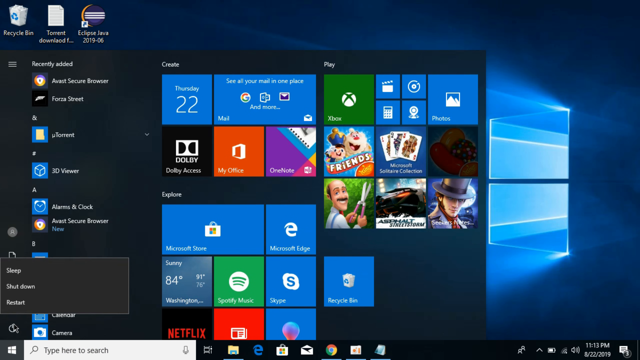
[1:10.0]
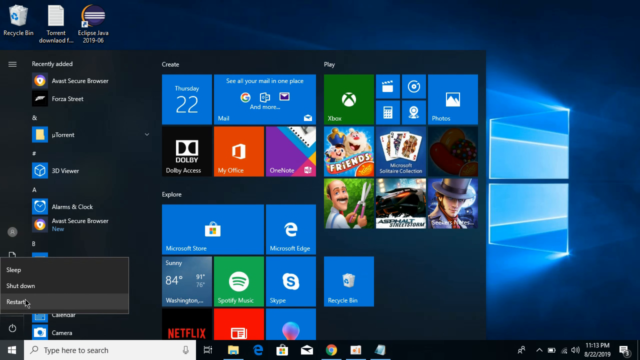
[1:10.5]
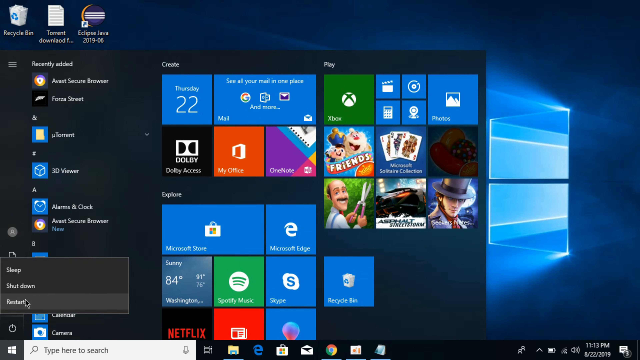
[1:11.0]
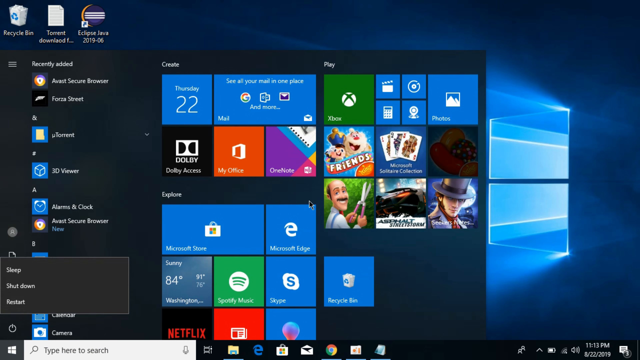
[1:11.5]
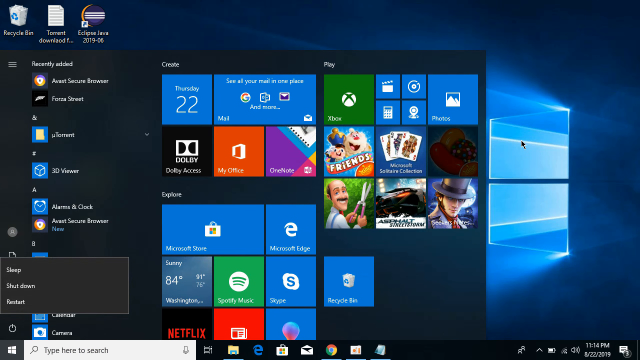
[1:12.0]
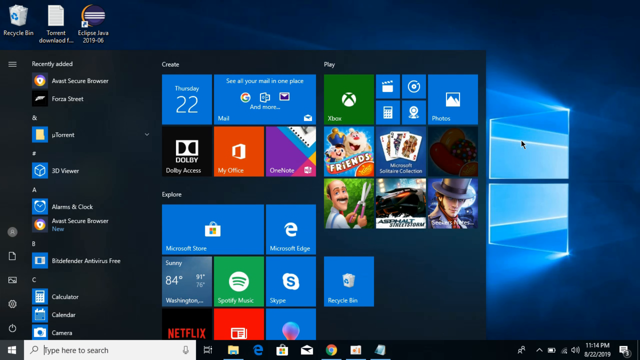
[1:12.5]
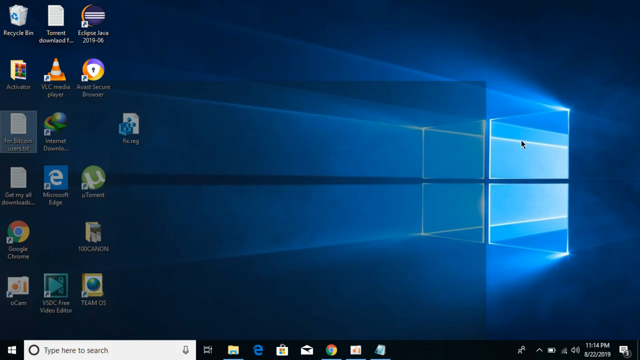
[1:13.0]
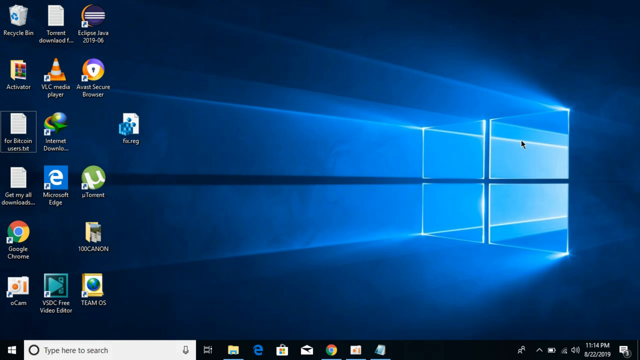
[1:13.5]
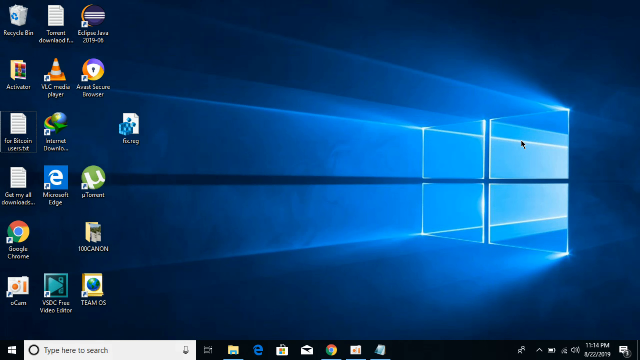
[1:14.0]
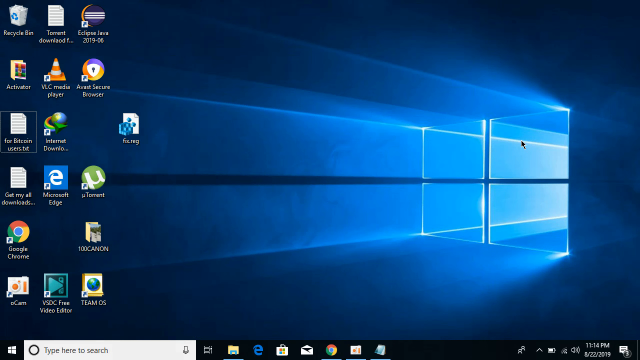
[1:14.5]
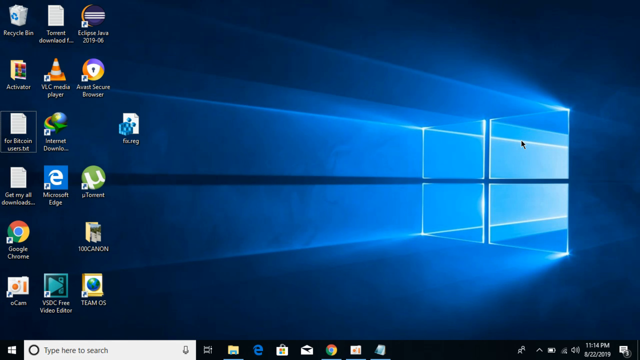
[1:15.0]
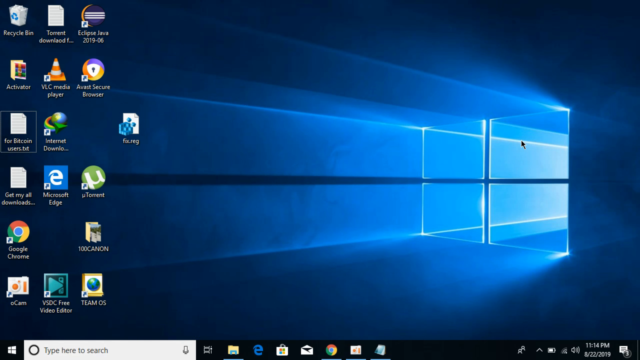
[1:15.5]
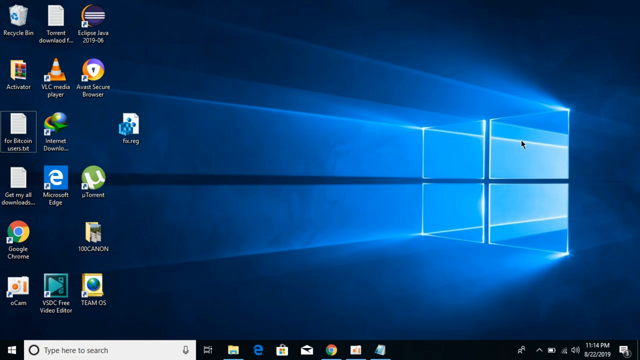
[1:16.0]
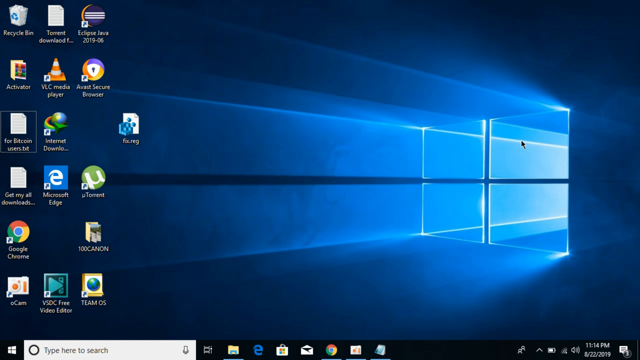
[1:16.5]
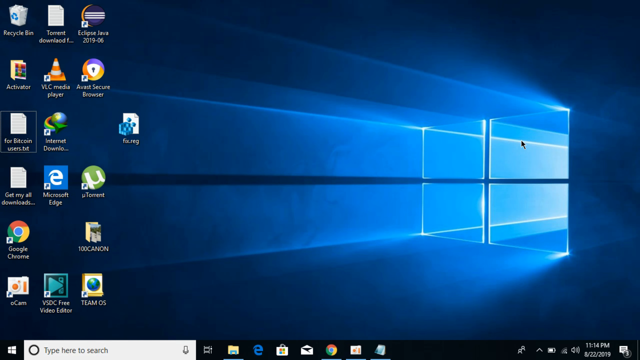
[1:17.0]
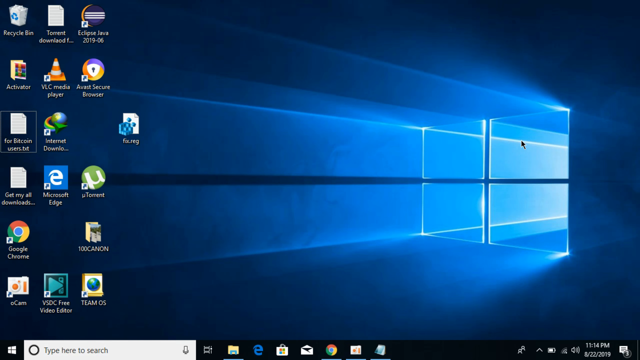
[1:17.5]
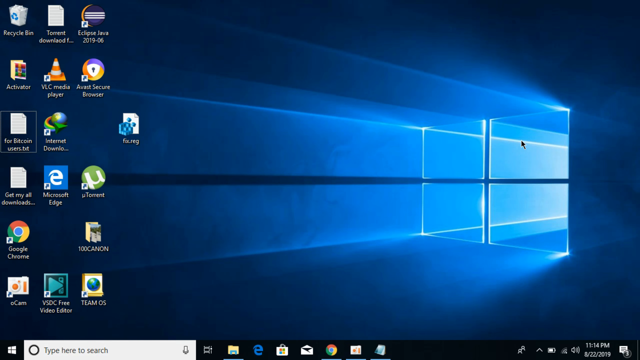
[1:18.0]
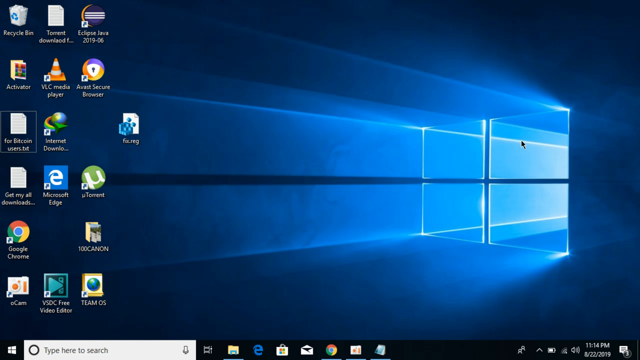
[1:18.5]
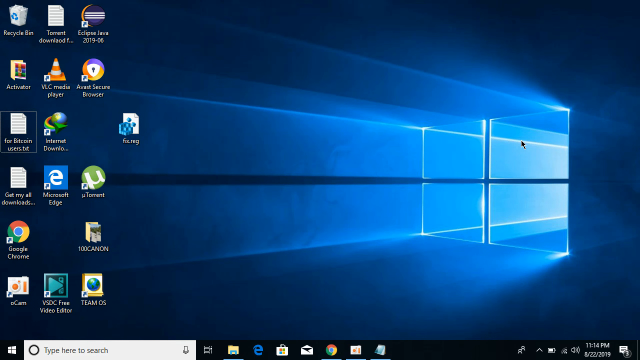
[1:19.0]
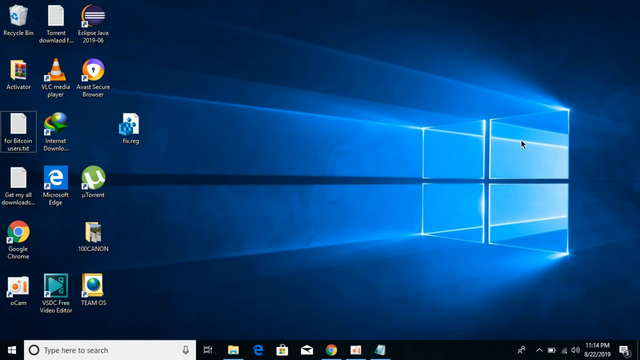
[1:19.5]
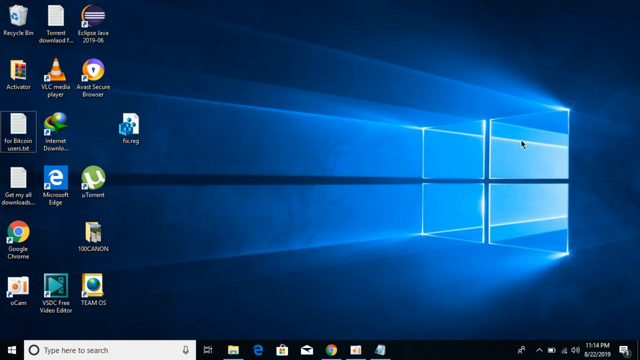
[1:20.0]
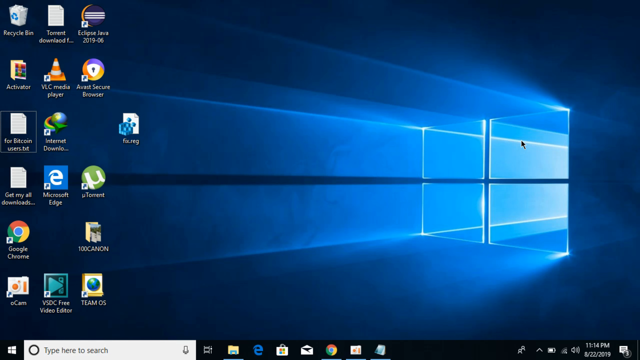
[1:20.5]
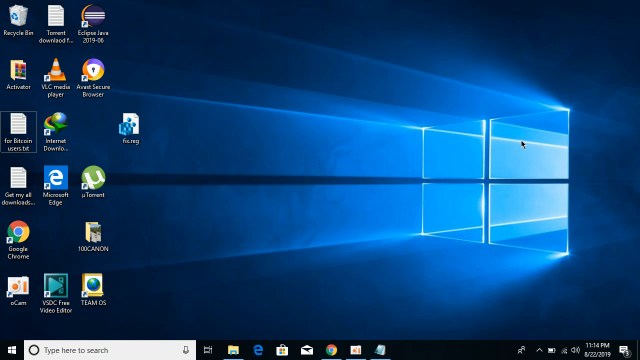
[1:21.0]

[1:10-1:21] The Windows desktop is shown again. The user clicks the Start menu and looks at the power options, such as Power Off, Sign Out and Reboot. The Start menu also shows the widgets, indicating that it is Thursday the 22nd. It is unclear whether any of the power options is clicked. The menu goes away and the desktop remains on screen with nothing else happening. On the left side of the screen are icons for the Recycle Bin and the Bitcoin users TXT file, shortcuts to Microsoft Edge, Google Chrome and uTorrent, icons for Eclipse Java, and a folder labeled "100 Canon," probably photos from a Canon digital camera.